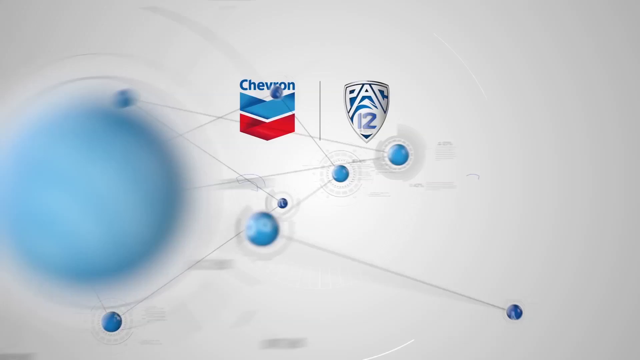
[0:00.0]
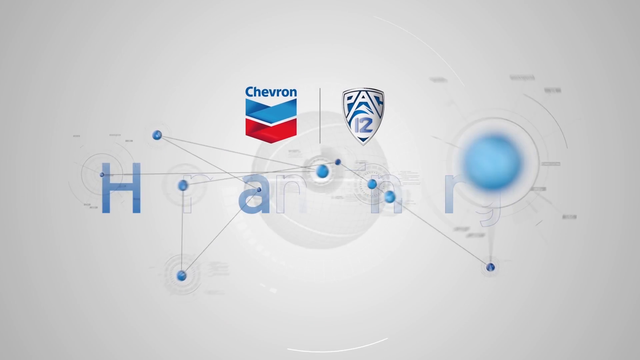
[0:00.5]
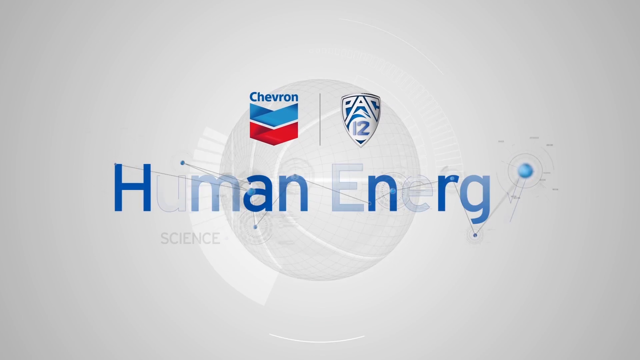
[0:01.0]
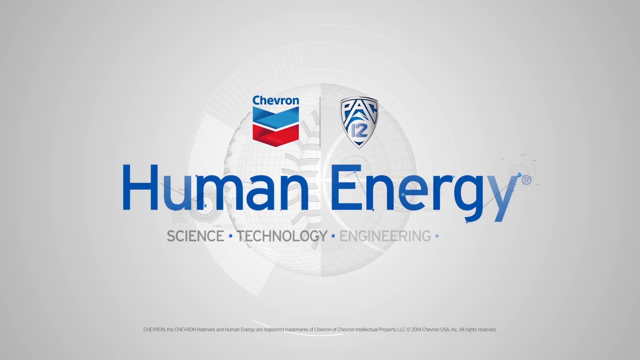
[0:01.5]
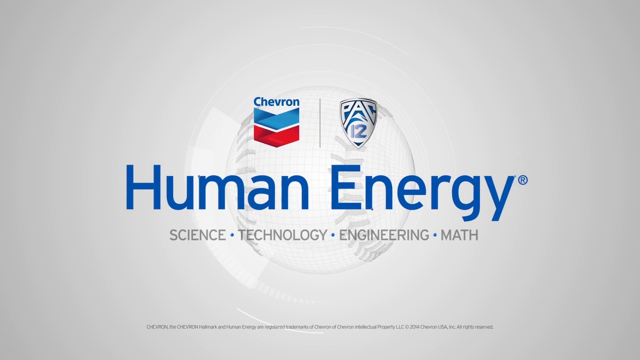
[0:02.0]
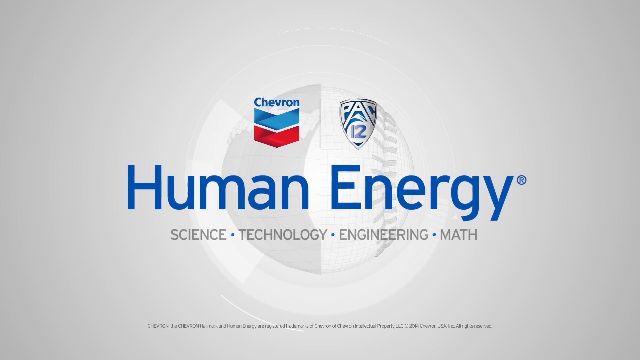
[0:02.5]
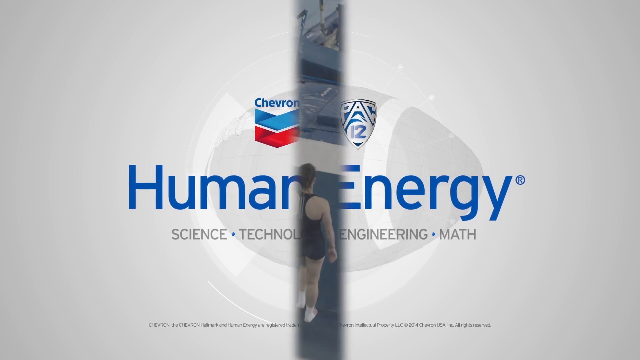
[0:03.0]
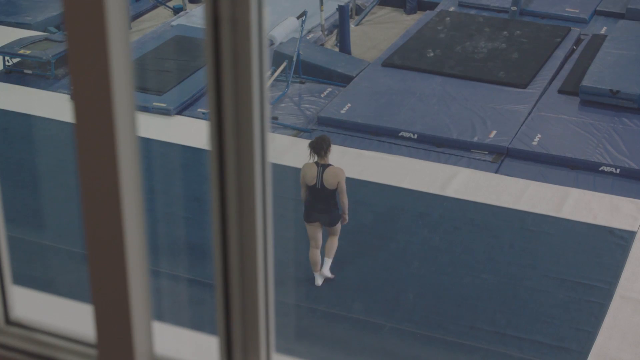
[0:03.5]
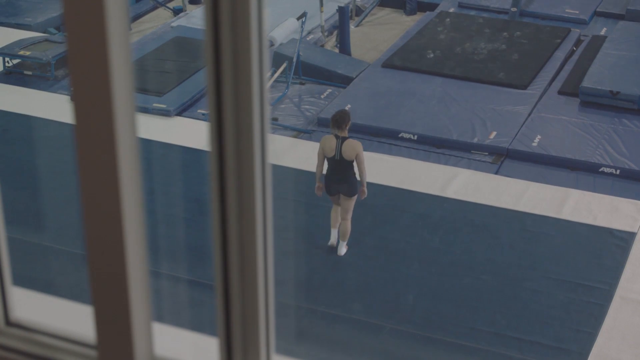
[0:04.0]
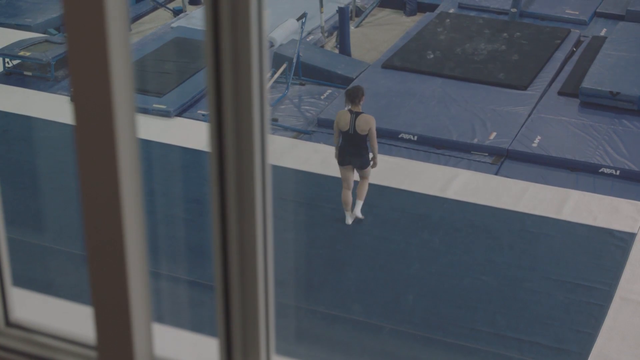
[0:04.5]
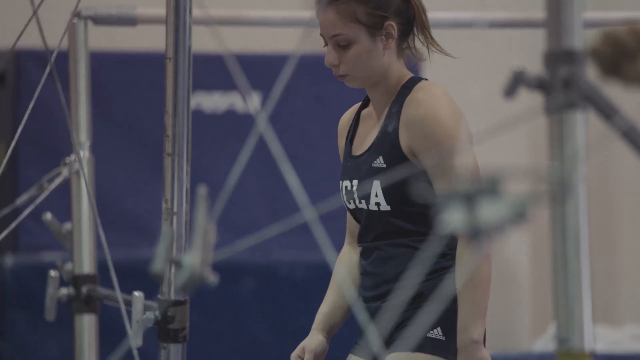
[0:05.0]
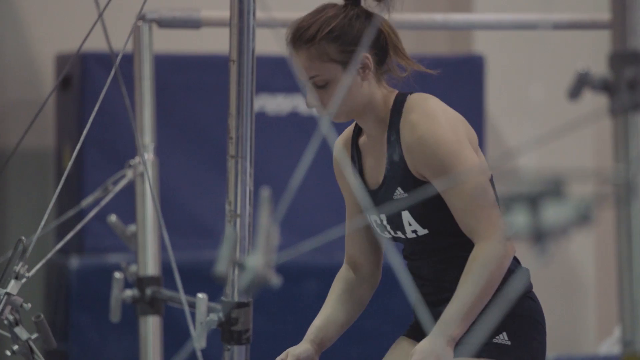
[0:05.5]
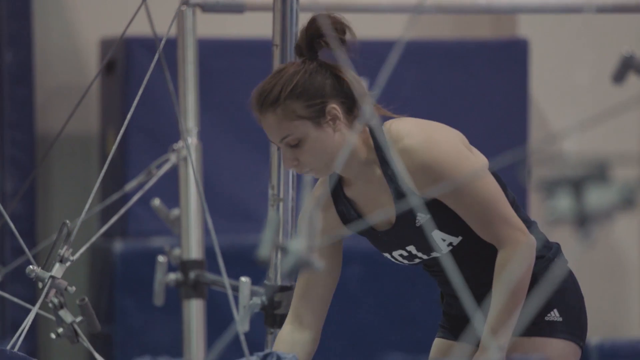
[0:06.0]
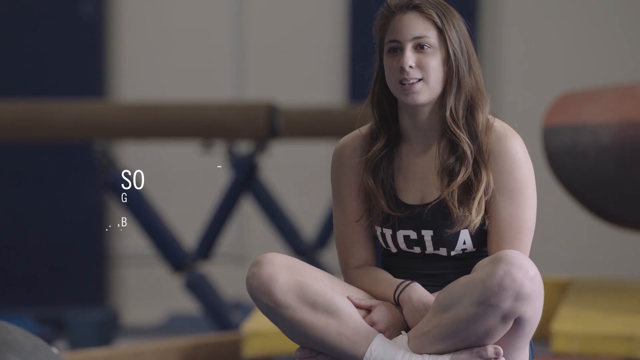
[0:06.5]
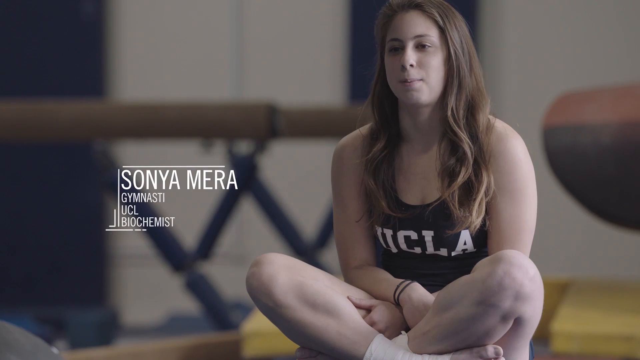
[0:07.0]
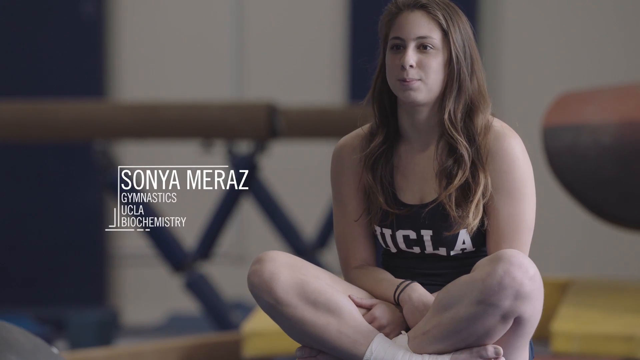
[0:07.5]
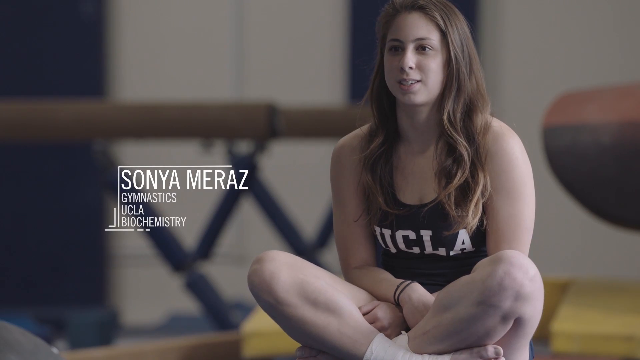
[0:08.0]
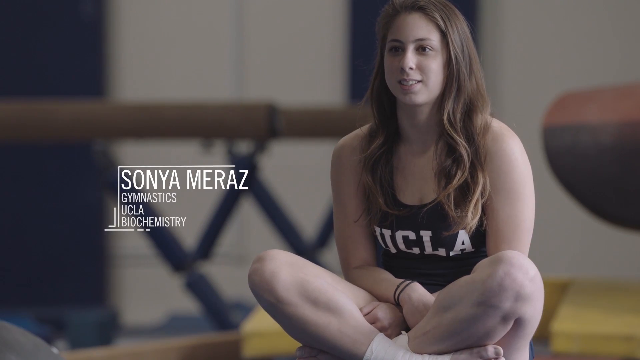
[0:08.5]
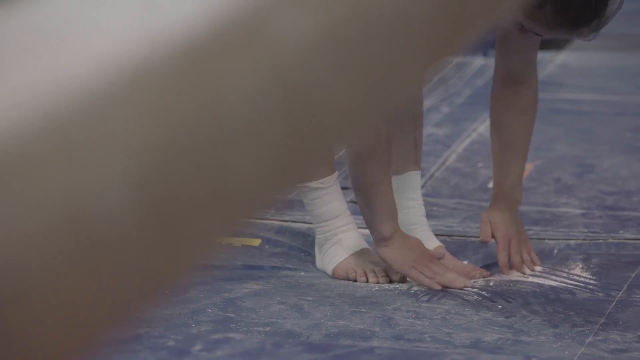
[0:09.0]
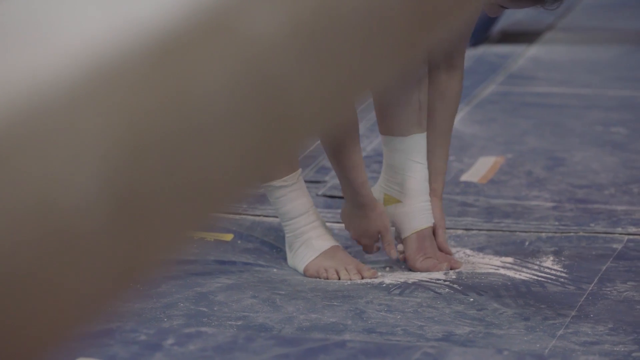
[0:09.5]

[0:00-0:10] Blue text in the middle of a mostly white background reads "human energy," and underneath it reads "science, technology, engineering, and math." The view then looks directly down at what looks to be a gymnast in a gym area; she walks in toward one part of the gym. A close-up shows her bending down. This transitions to a floor-level view of her seated with her legs crossed. Text to the left reads "Sonia Meraz," and it can be seen that she is on the UCLA gymnastics team; it looks like she majors in biochemistry. She is kind of talking into the camera. A different shot then shows her bending over, touching her ankles and feet.